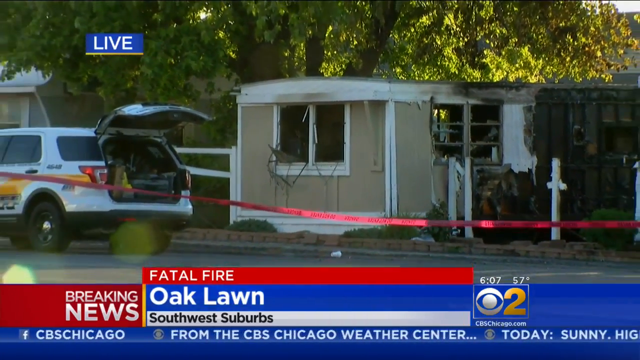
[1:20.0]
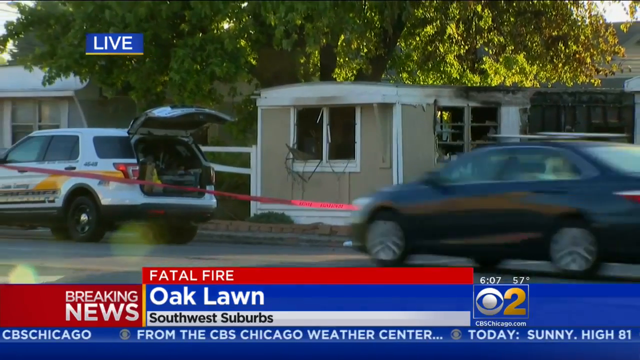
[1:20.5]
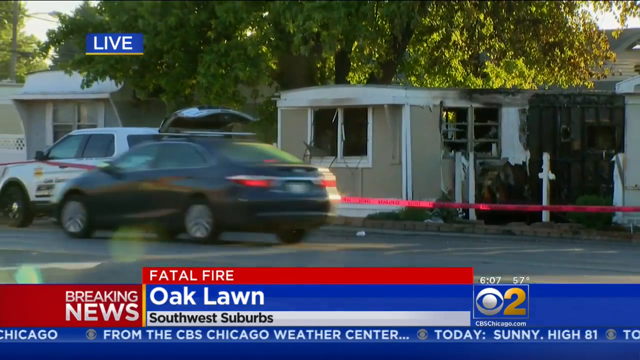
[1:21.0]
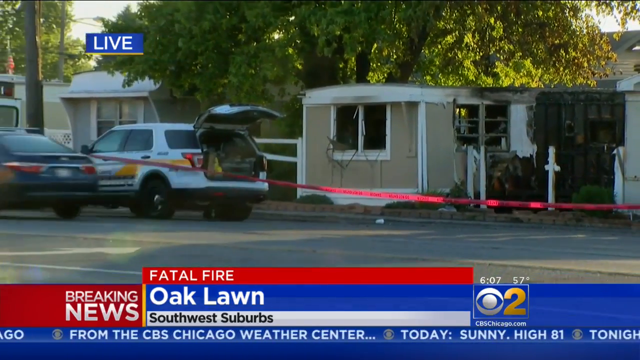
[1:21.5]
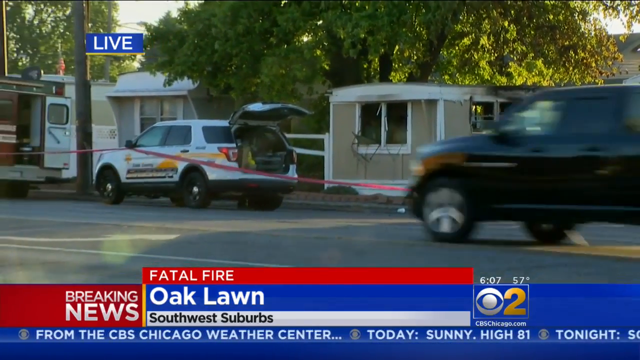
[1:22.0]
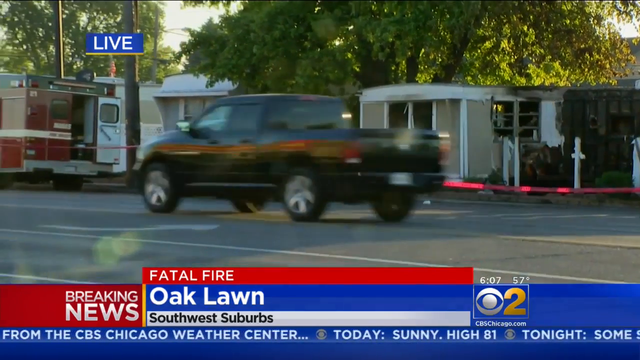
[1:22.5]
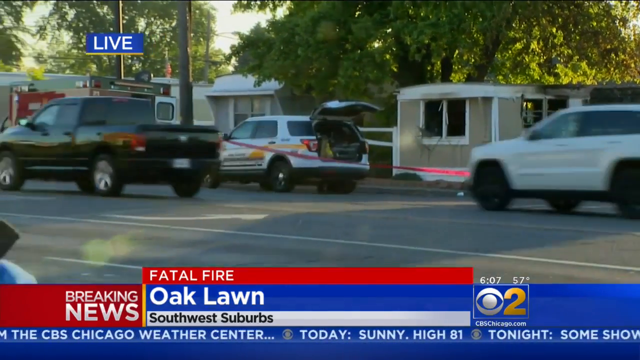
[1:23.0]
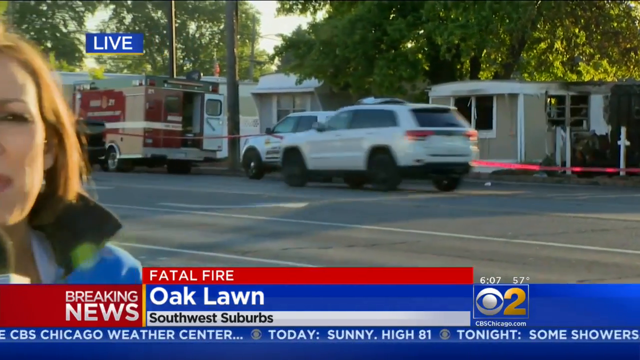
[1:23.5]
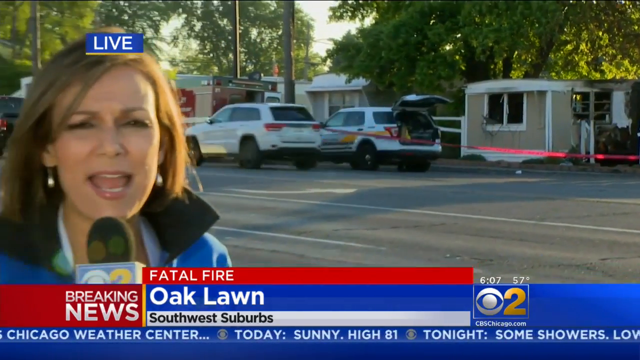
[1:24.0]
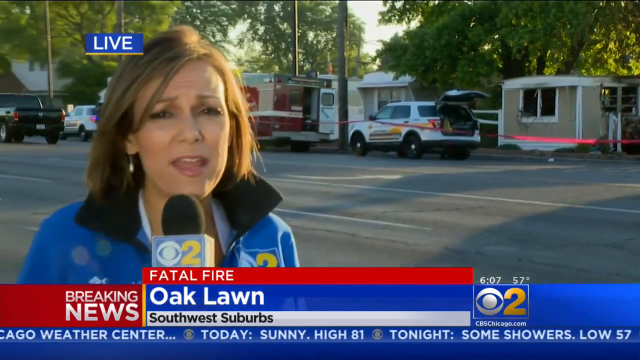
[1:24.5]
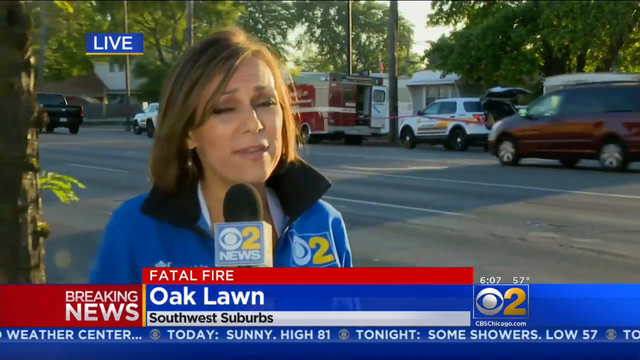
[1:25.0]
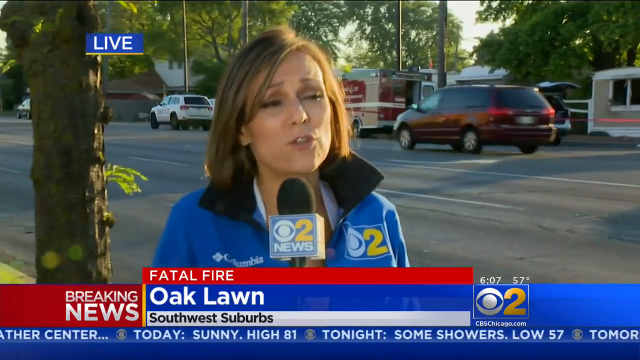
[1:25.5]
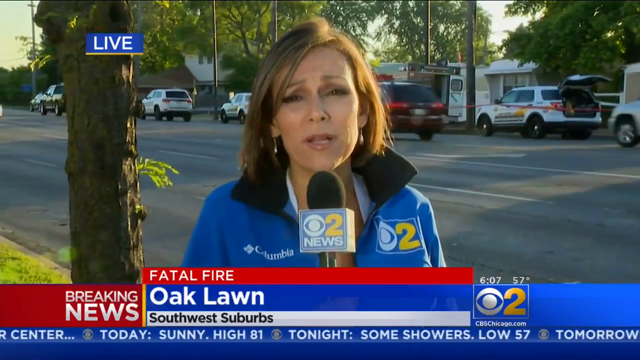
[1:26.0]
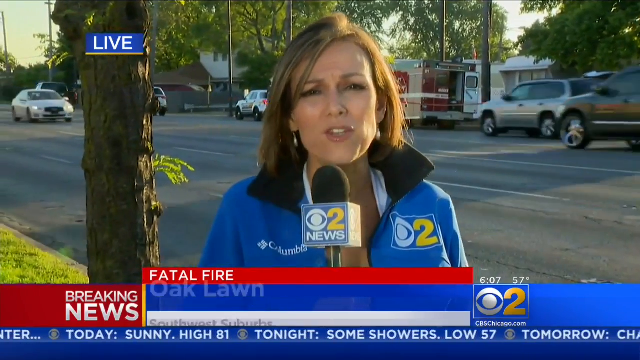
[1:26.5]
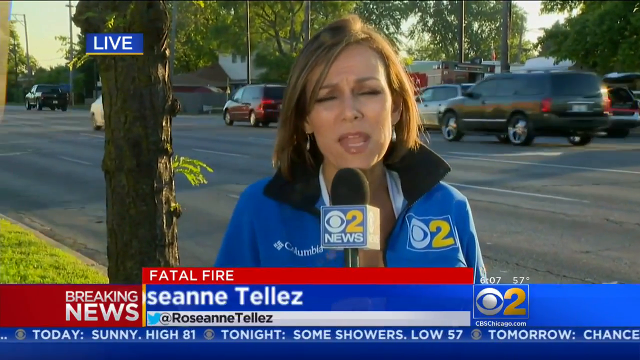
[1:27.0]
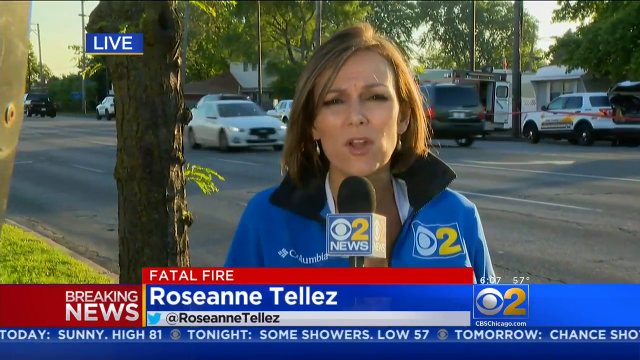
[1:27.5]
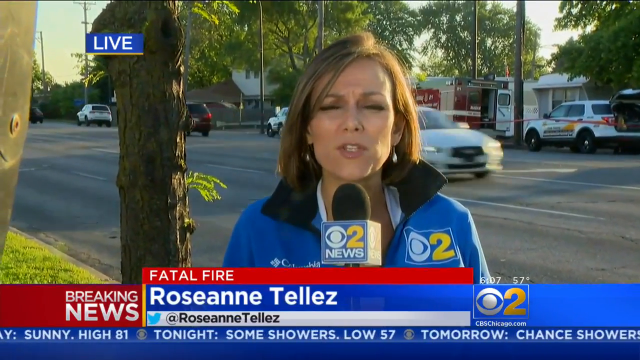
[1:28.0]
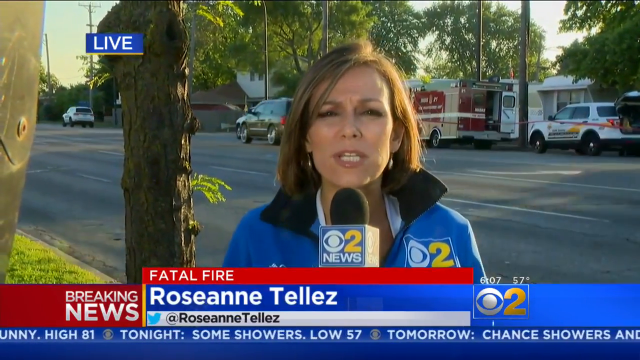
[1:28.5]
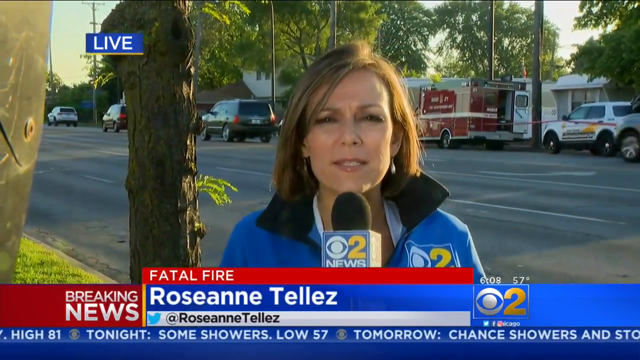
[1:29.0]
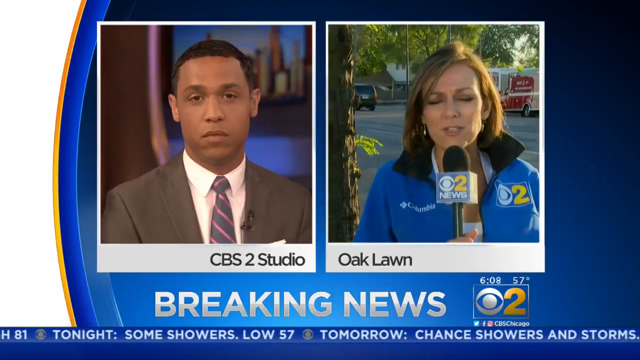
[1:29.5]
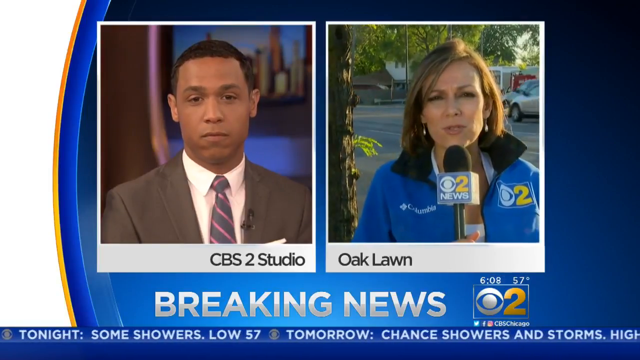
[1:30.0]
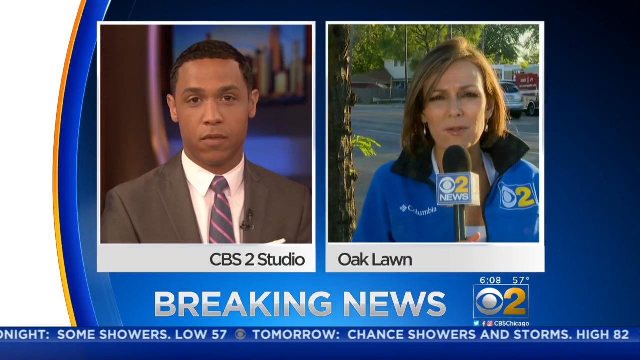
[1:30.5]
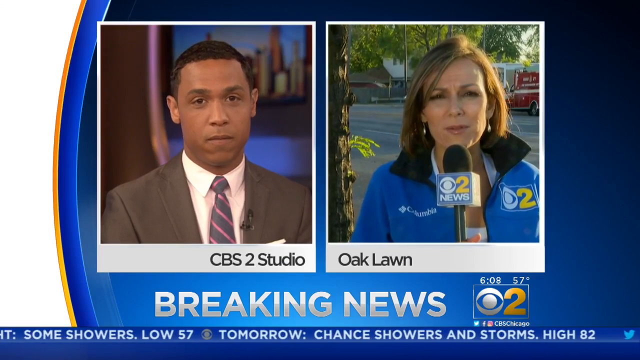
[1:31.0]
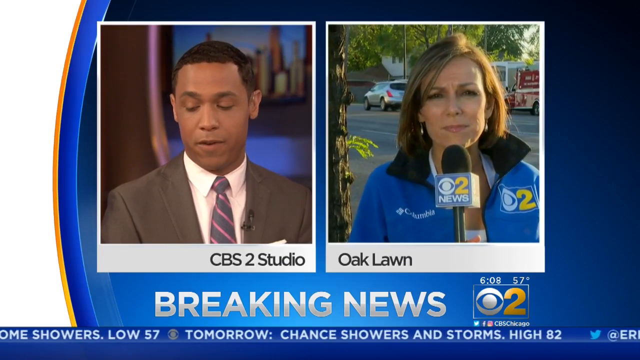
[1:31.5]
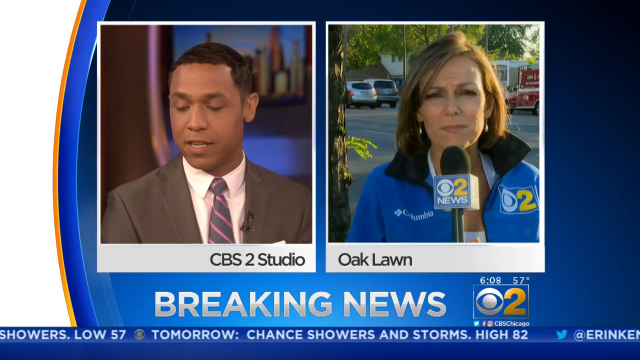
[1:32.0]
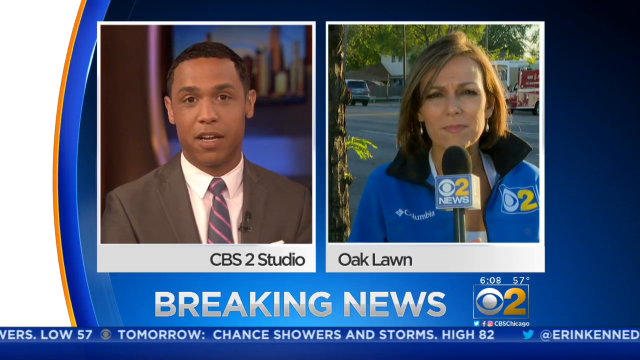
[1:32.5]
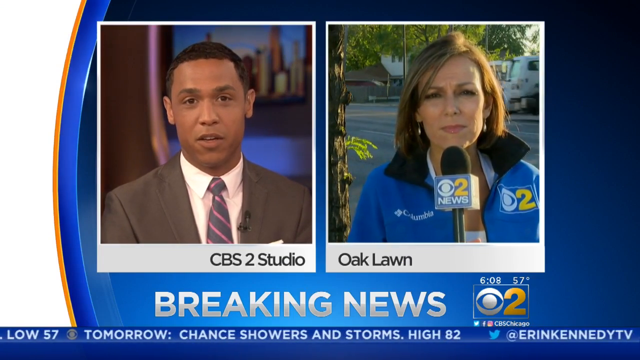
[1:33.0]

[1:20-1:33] A damaged building appears, with cars moving very quickly from right to left on the road in front of it. The camera then moves away from the building and positions itself in front of a female journalist, who takes a central position in the frame. She wears a blue jacket with a black collar, holds a microphone in her right hand, and has short brown hair. Next, two rectangular windows appear on the screen with a person in each: on the right is the same woman, and on the left is a man wearing a brown jacket, a white shirt and a striped tie.